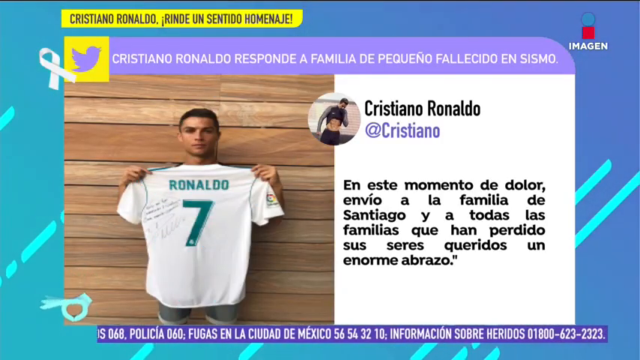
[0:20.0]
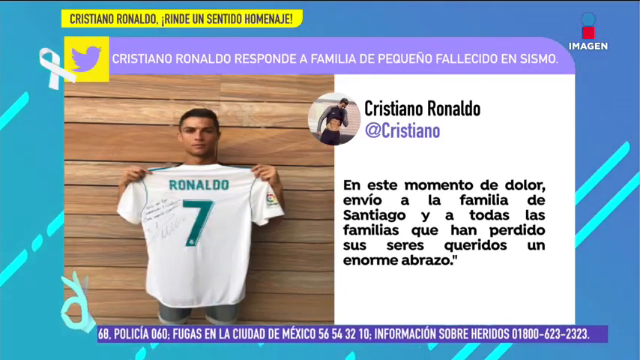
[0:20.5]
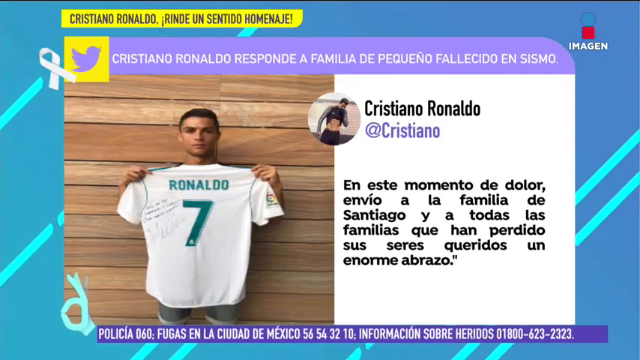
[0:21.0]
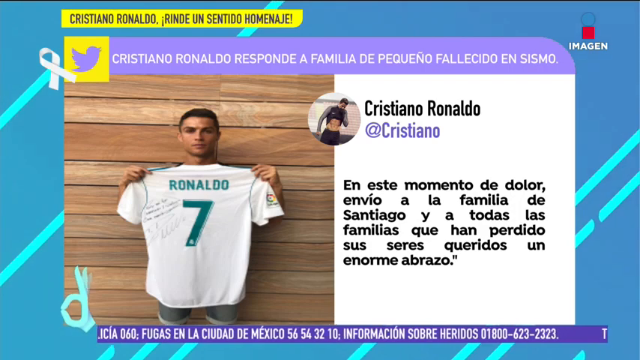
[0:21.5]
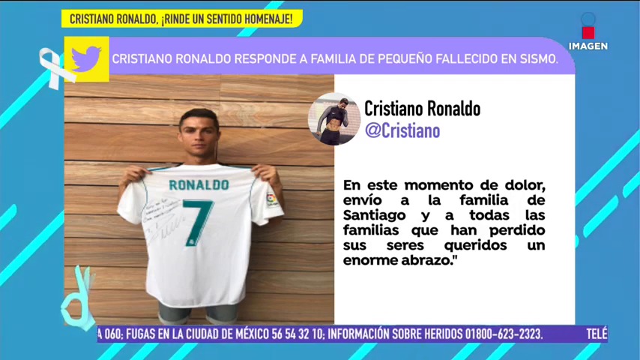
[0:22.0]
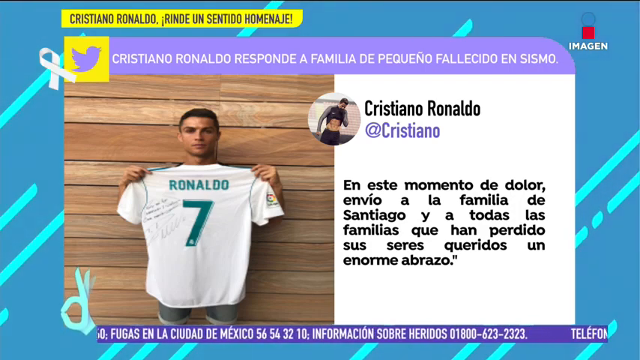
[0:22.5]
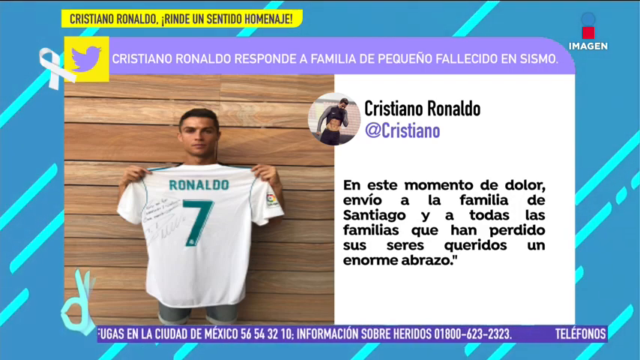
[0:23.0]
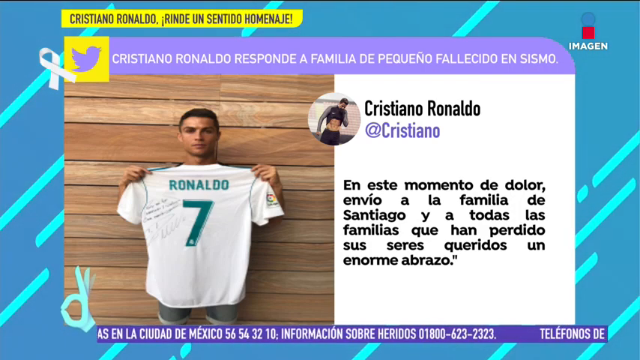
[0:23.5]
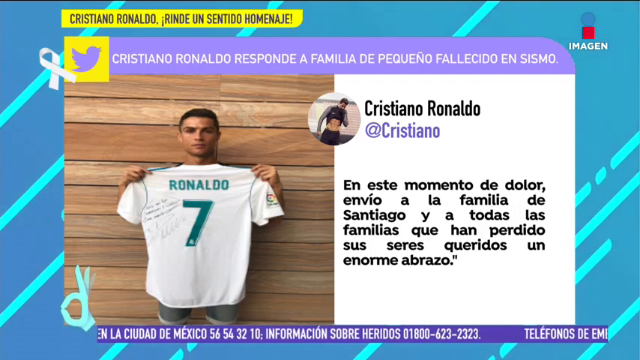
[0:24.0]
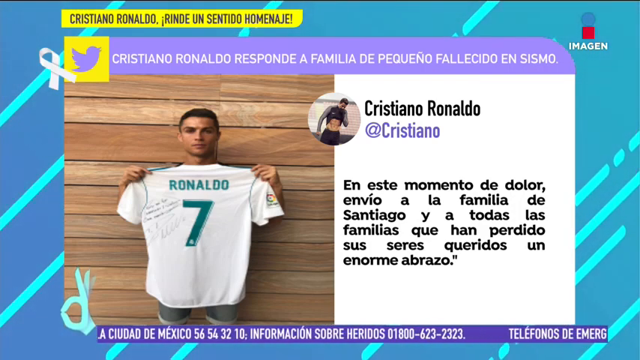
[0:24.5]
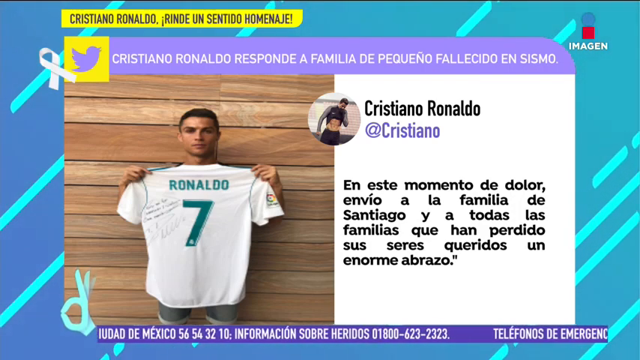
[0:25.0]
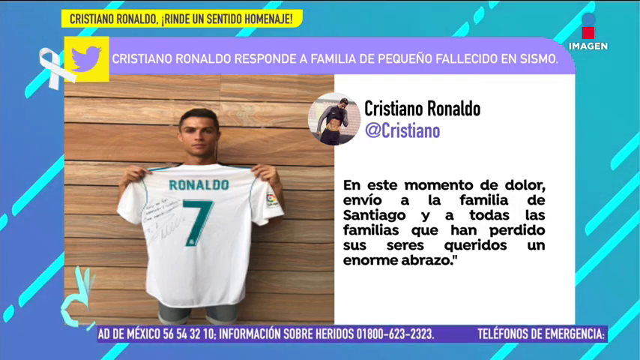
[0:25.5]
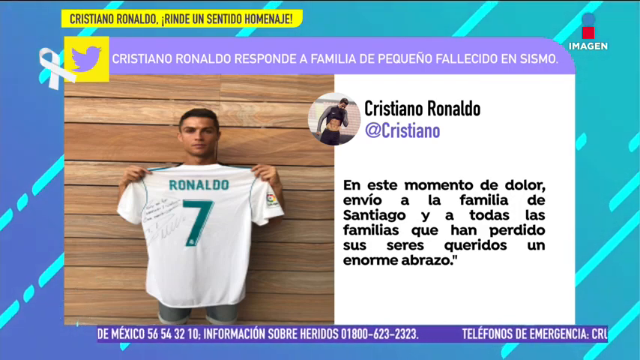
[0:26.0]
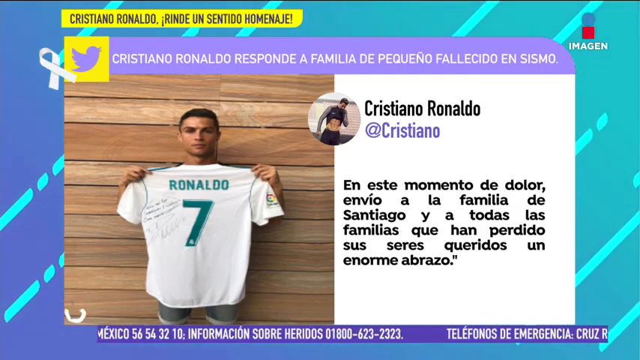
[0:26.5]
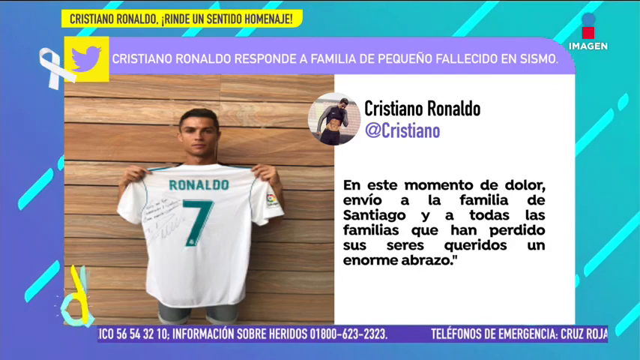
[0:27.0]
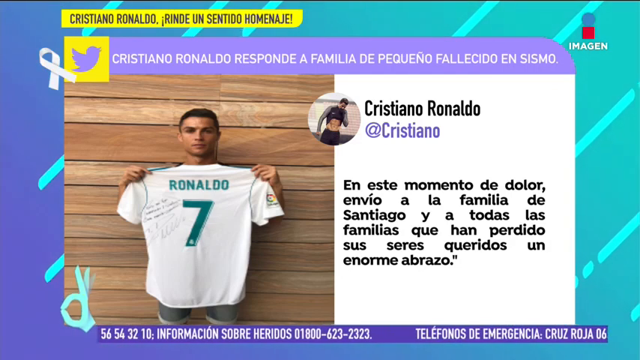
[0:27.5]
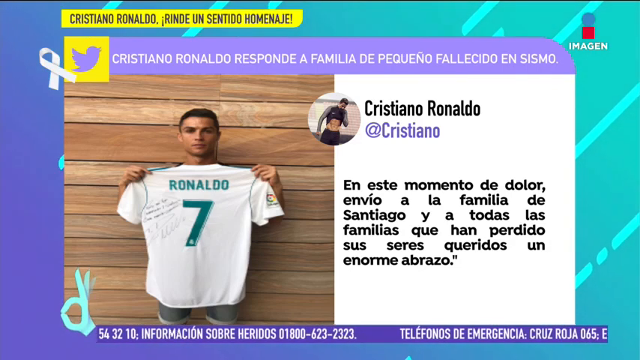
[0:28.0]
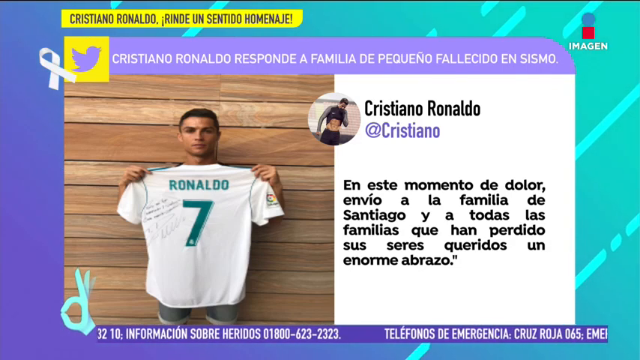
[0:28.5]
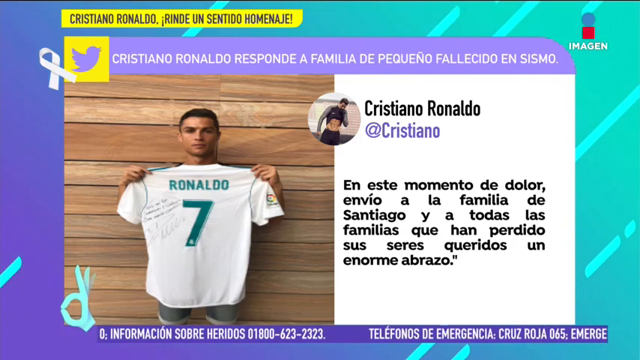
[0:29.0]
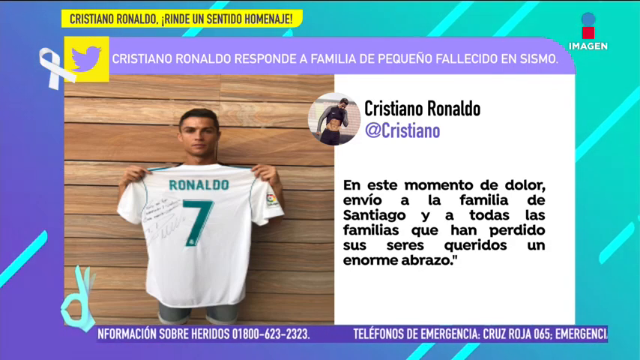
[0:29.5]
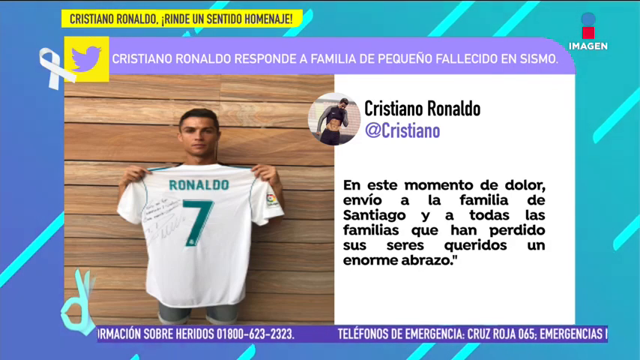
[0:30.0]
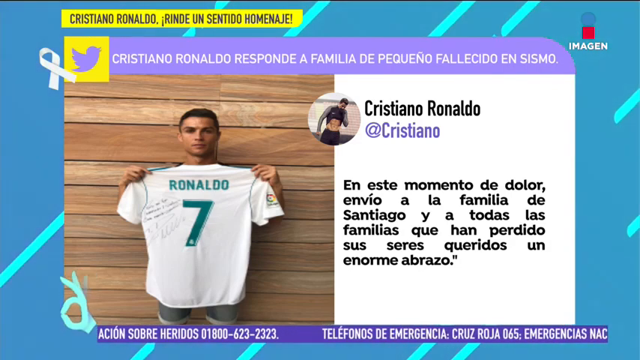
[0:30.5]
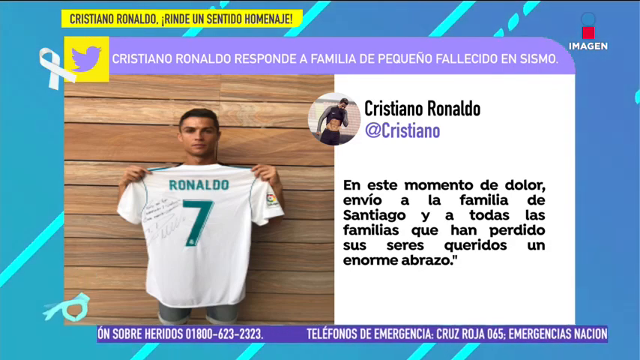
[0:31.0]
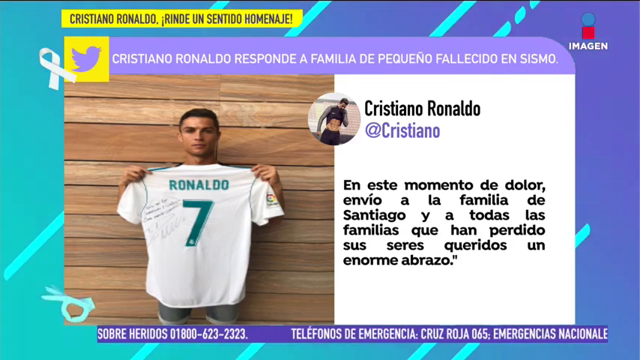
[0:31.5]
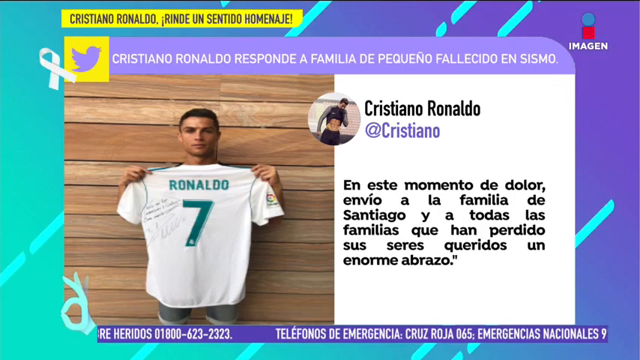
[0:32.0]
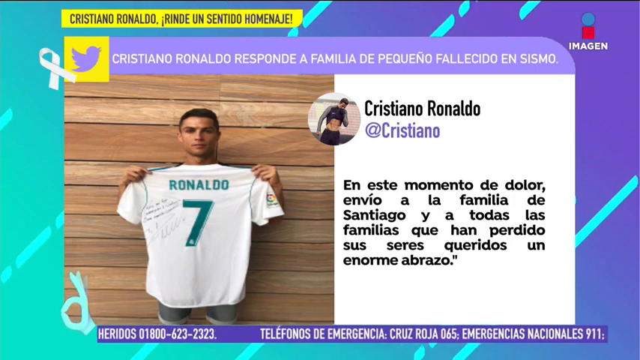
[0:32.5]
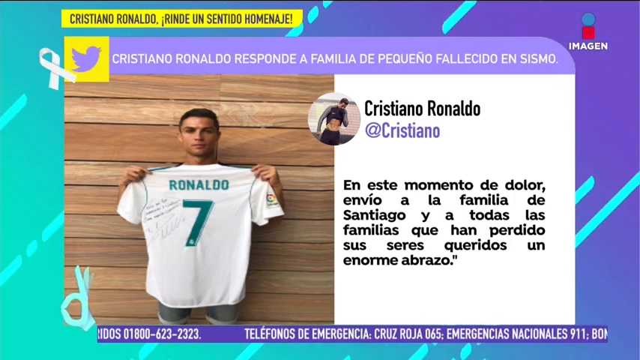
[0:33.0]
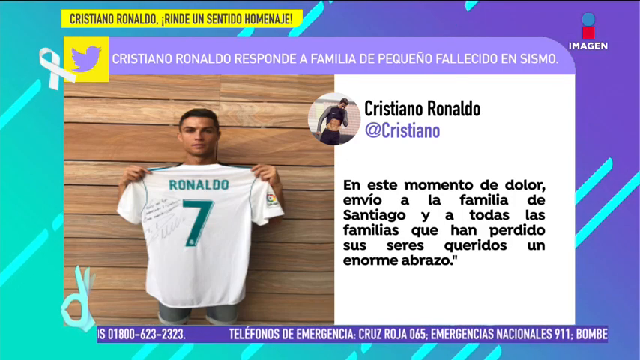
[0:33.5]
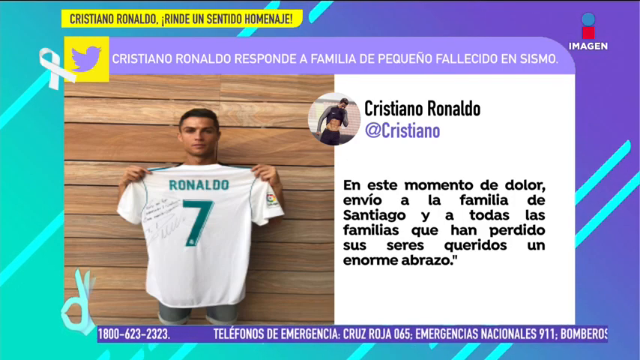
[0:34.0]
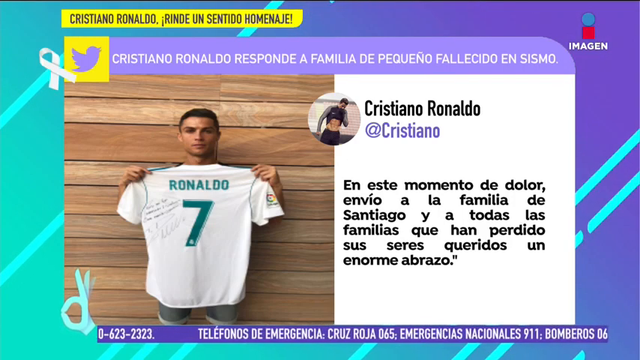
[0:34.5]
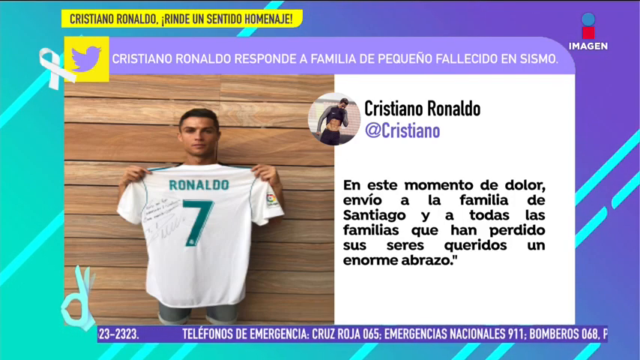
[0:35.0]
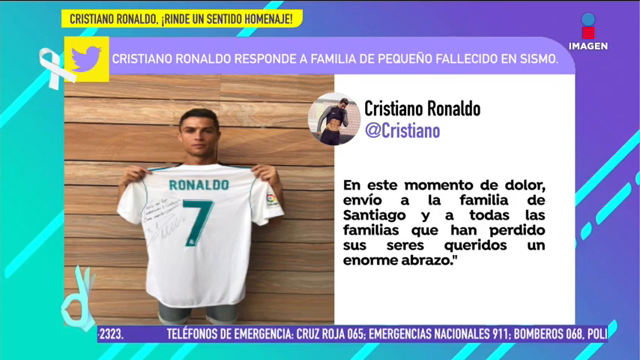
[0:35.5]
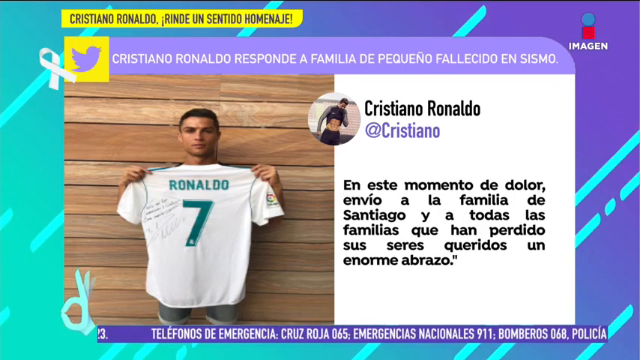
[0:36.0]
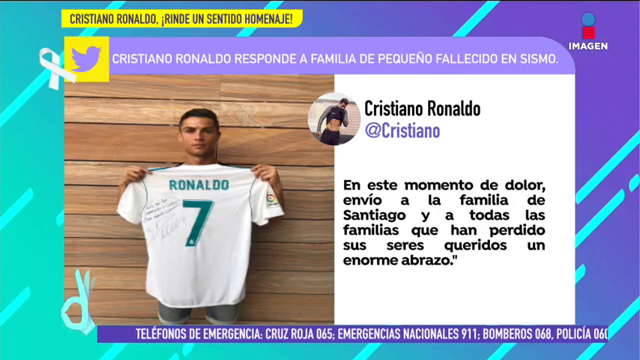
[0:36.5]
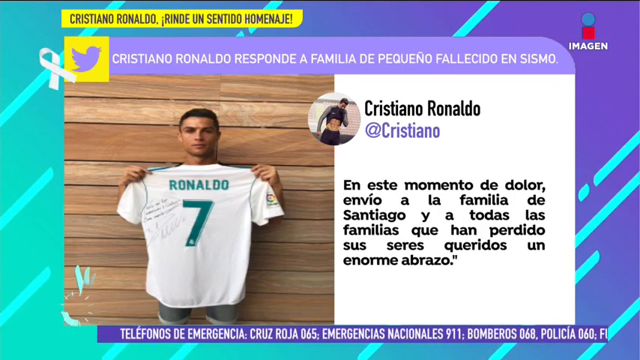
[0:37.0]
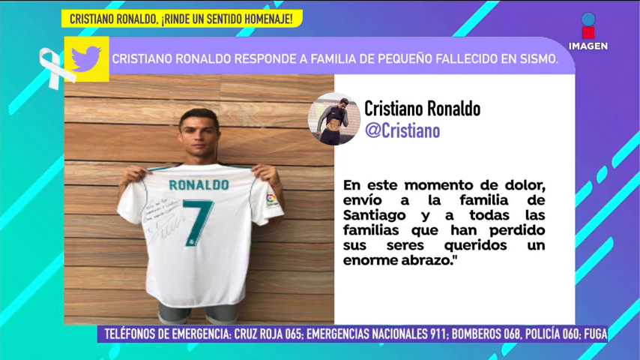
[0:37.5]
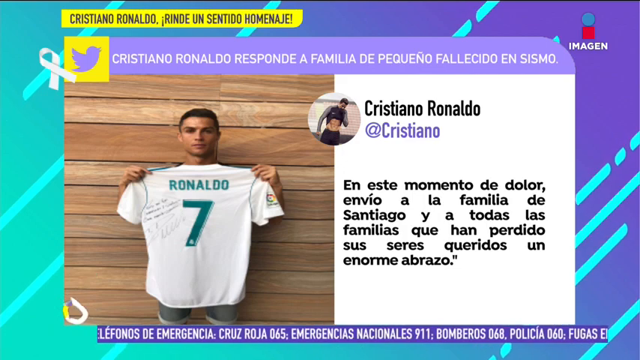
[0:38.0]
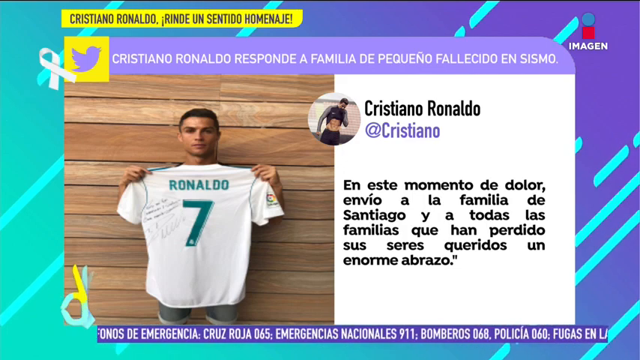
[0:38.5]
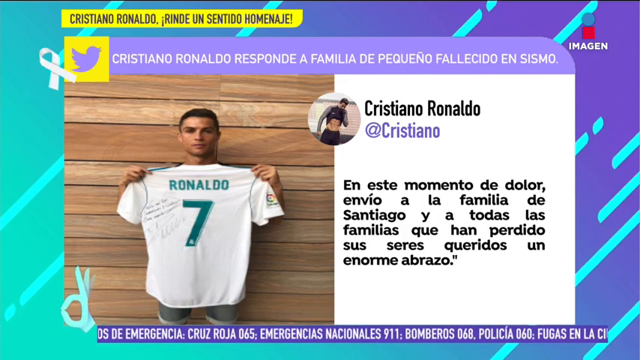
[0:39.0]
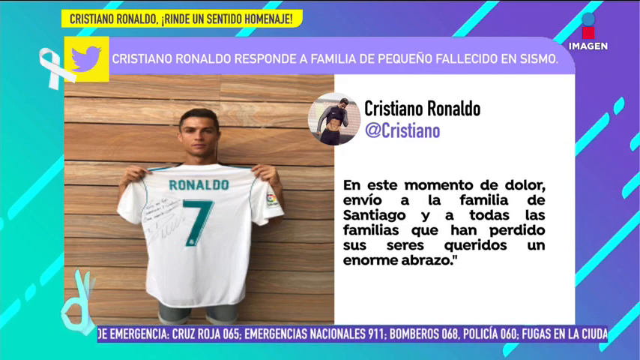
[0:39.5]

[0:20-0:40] The tweet shows Cristiano Ronaldo posing for a picture with his Real Madrid shirt, which has the Liga badge on the right-hand side and the number 7, with the Real Madrid badge on the number 7. On the left-hand side of the shirt is what looks like an autograph with a message. He holds the shirt up, with a wooden wall behind, and he is wearing short jeans. His tag, Cristiano, is also visible. Information then appears at the bottom of the screen, showing things like emergency numbers.